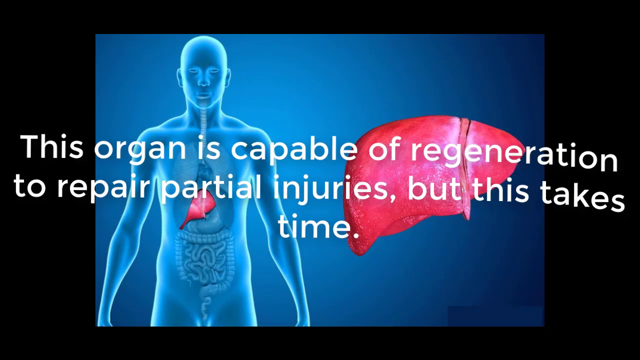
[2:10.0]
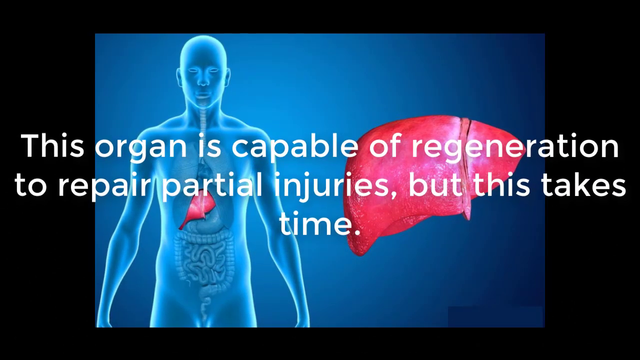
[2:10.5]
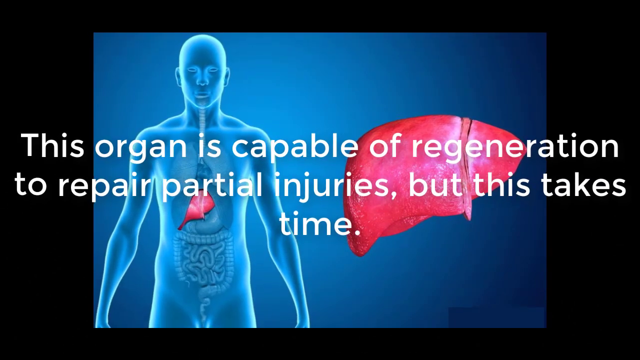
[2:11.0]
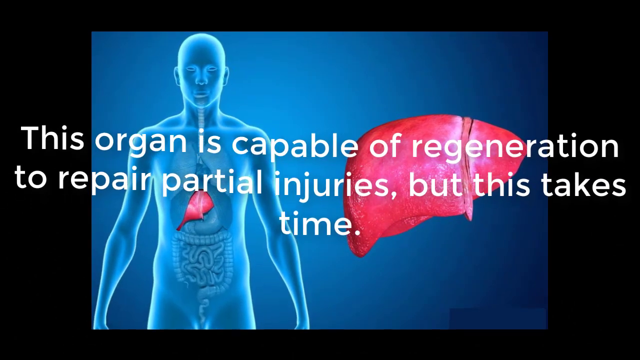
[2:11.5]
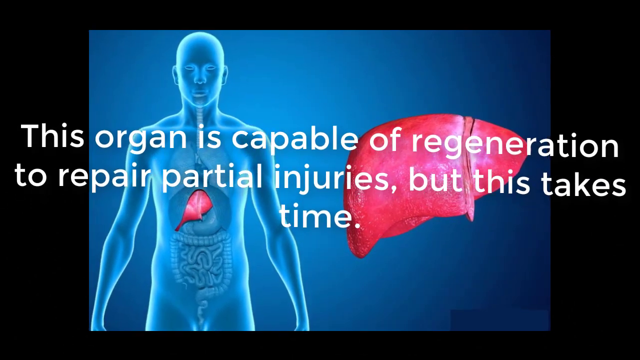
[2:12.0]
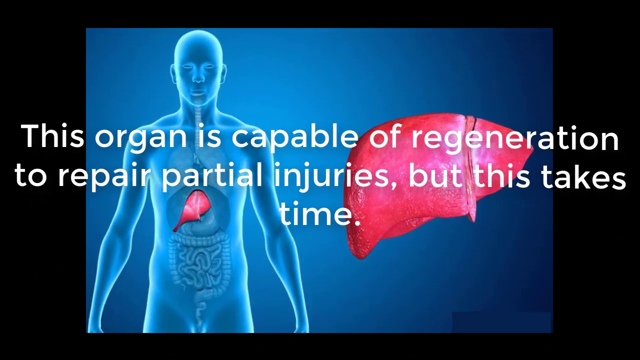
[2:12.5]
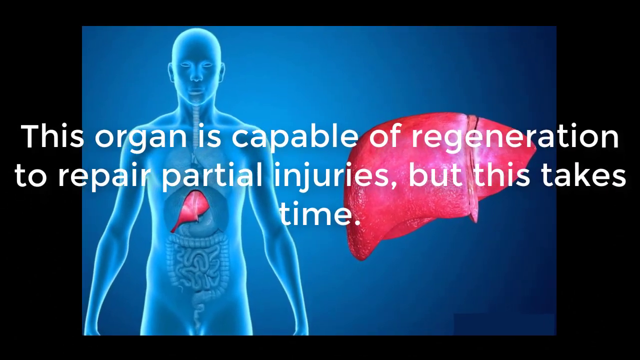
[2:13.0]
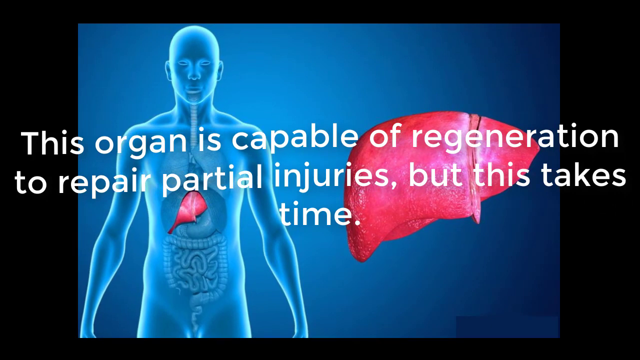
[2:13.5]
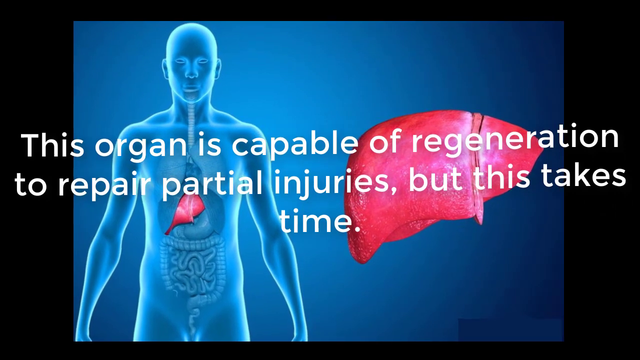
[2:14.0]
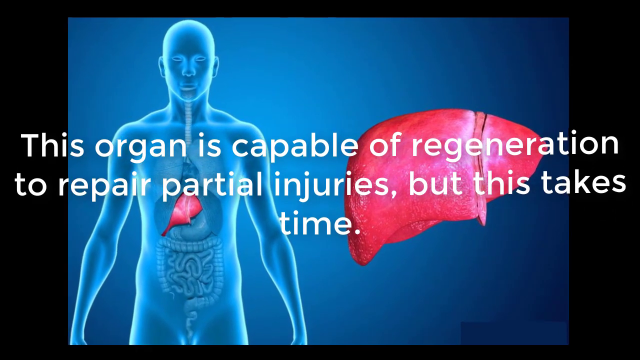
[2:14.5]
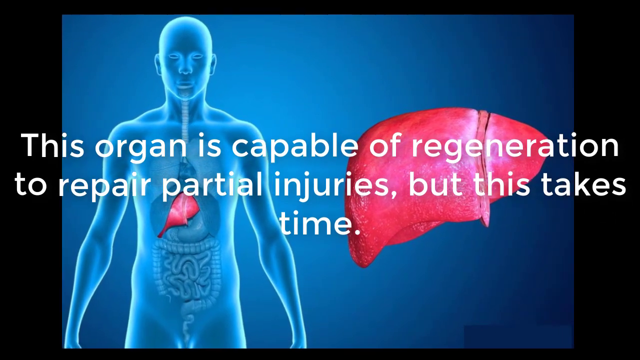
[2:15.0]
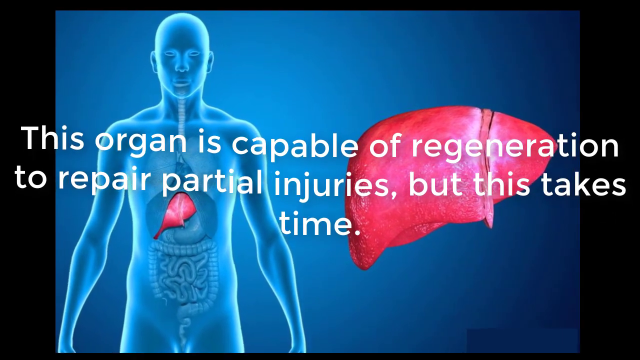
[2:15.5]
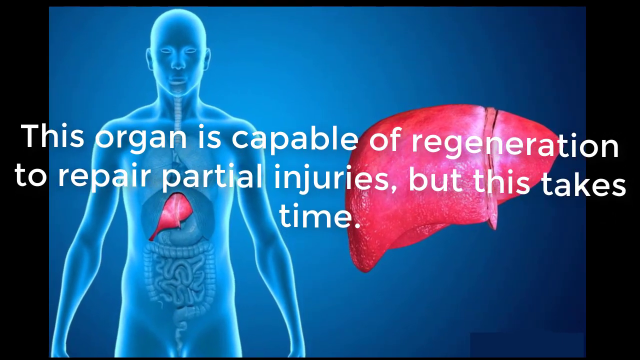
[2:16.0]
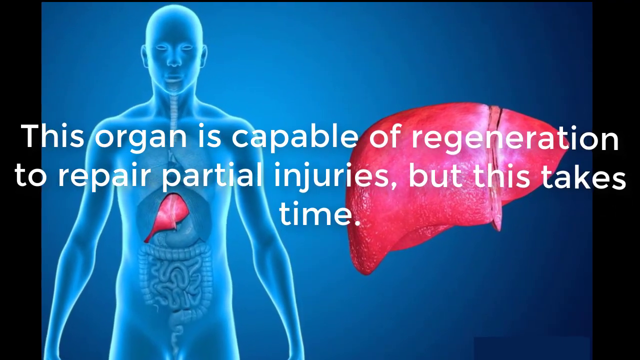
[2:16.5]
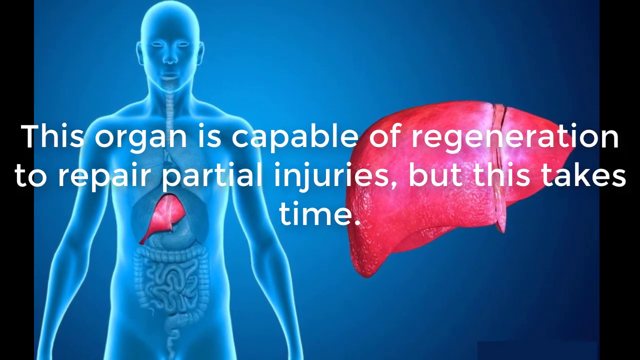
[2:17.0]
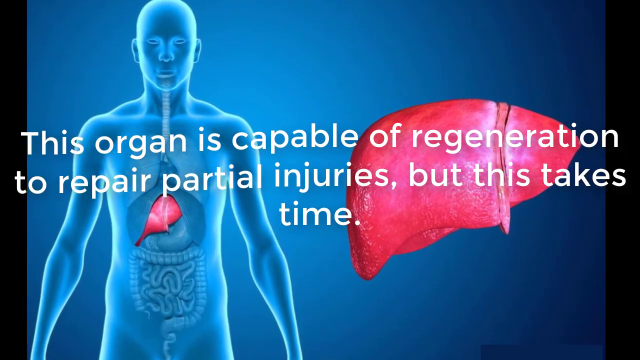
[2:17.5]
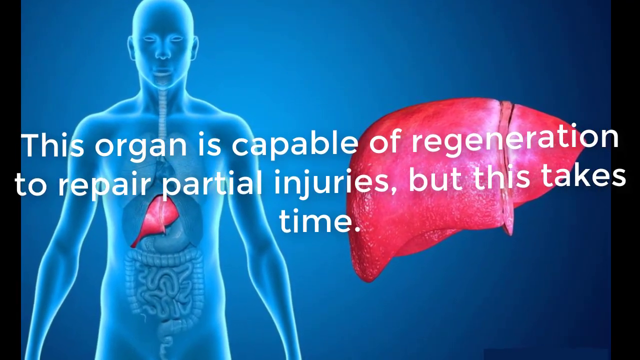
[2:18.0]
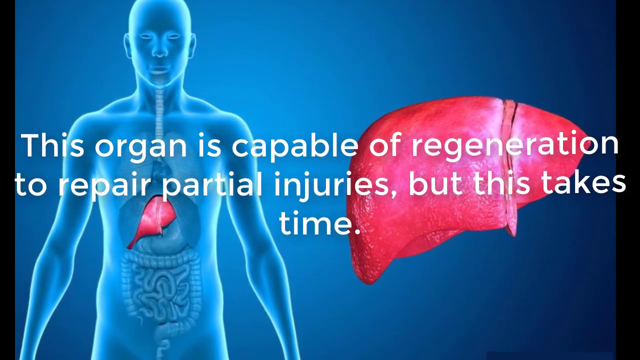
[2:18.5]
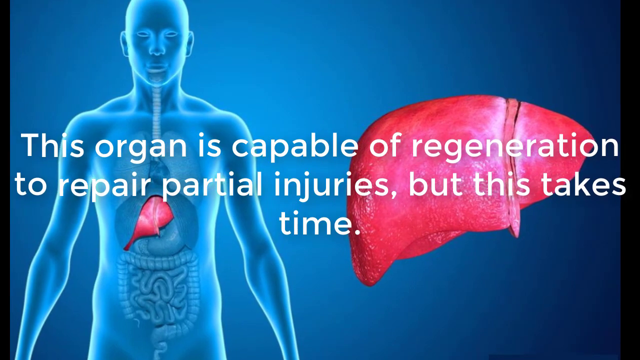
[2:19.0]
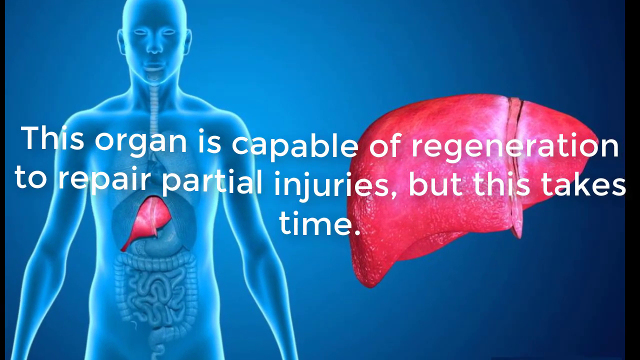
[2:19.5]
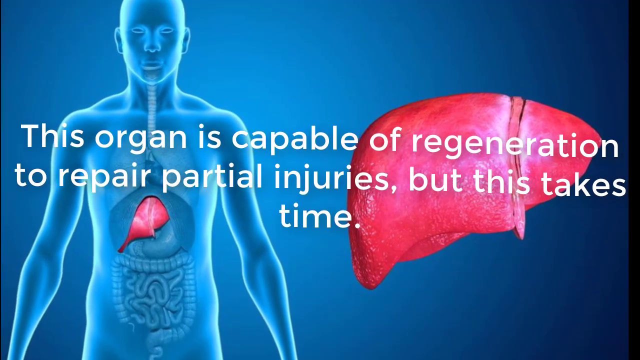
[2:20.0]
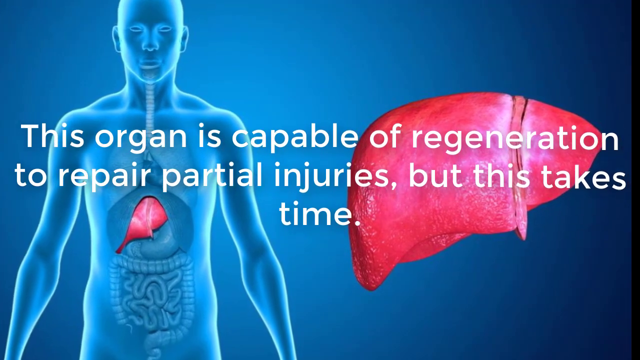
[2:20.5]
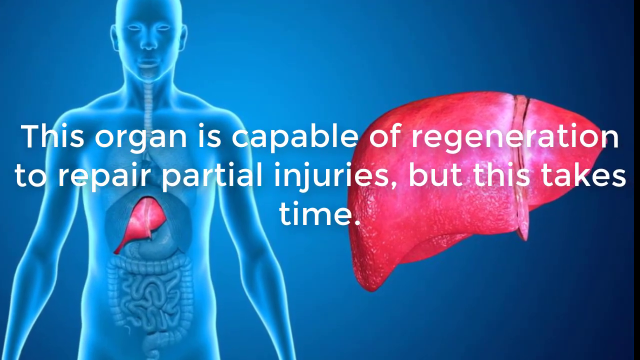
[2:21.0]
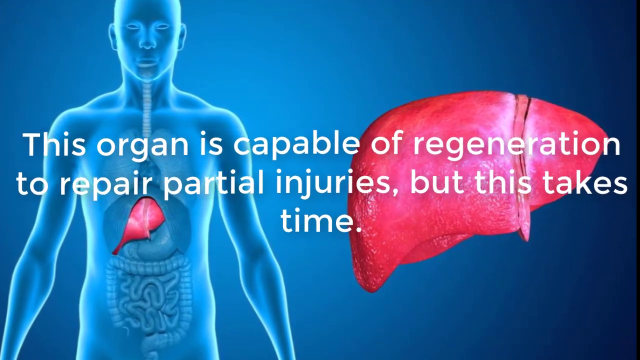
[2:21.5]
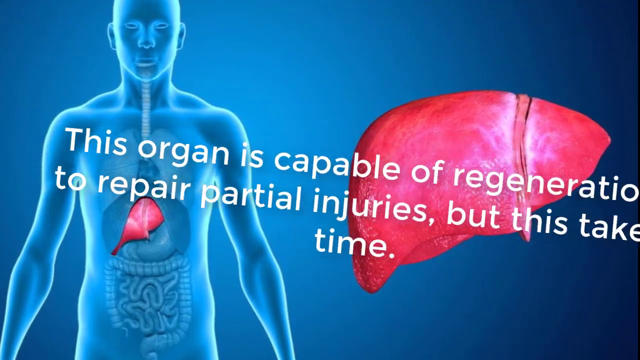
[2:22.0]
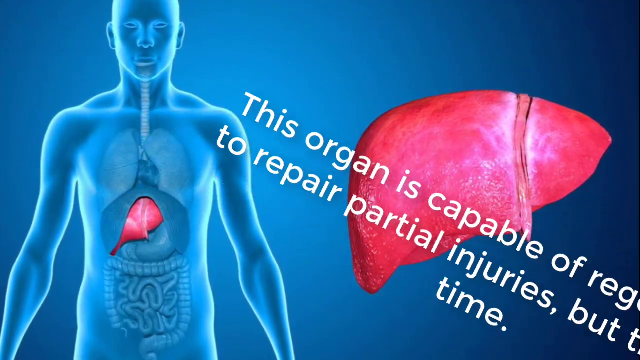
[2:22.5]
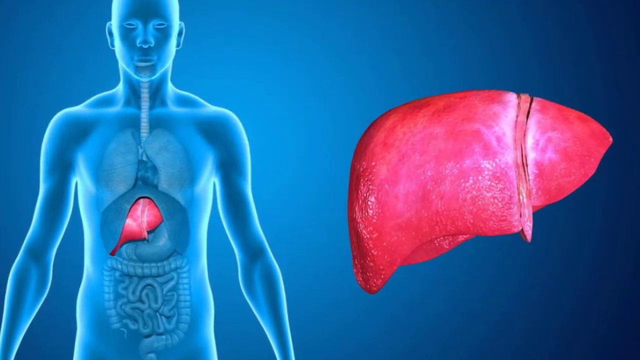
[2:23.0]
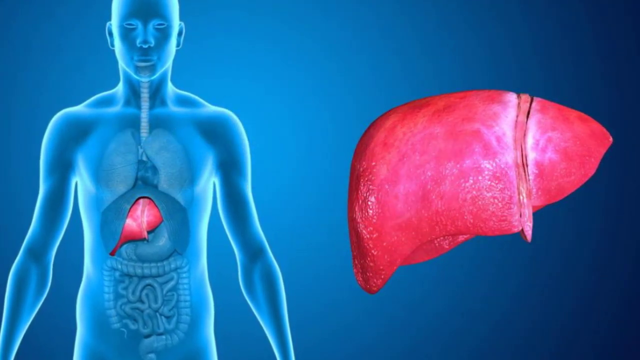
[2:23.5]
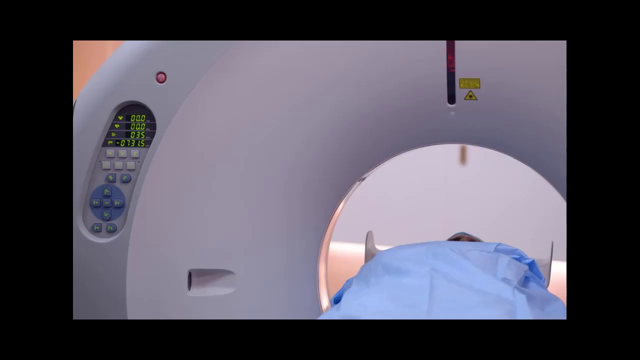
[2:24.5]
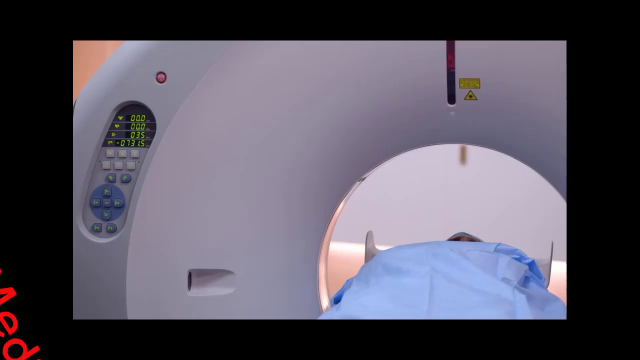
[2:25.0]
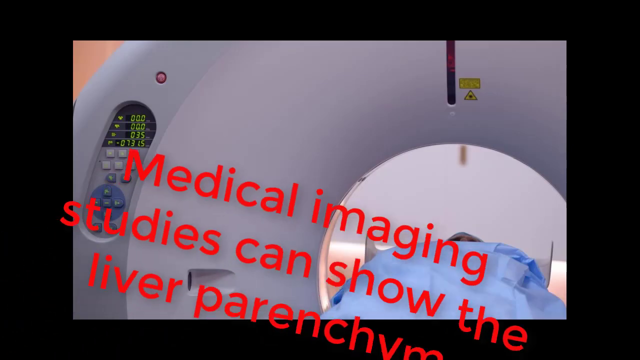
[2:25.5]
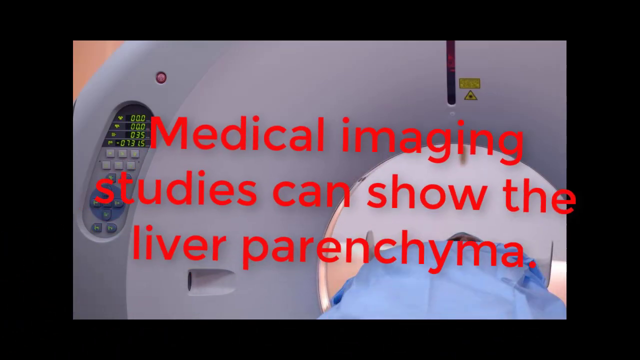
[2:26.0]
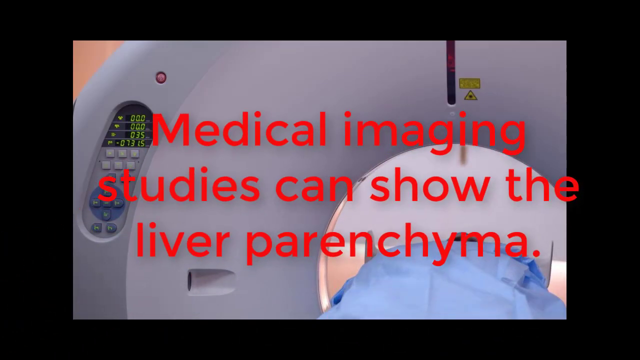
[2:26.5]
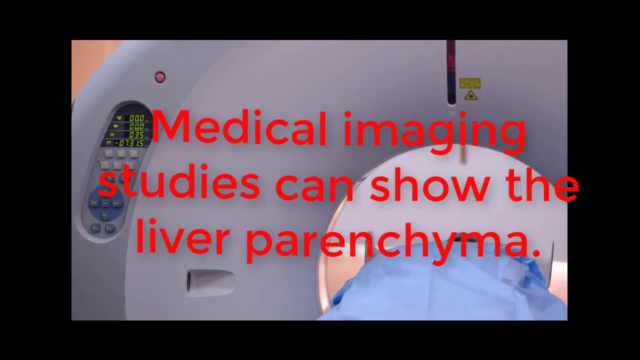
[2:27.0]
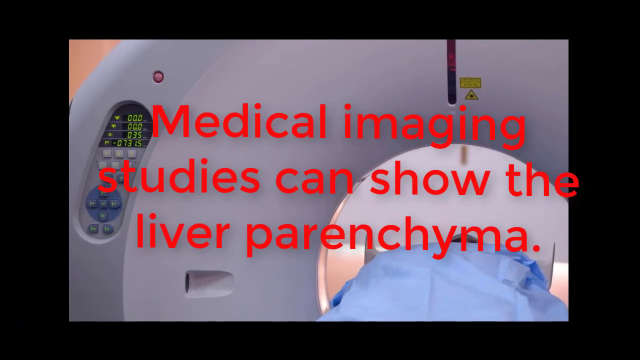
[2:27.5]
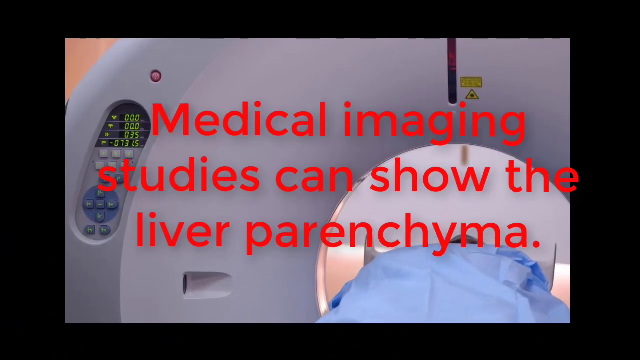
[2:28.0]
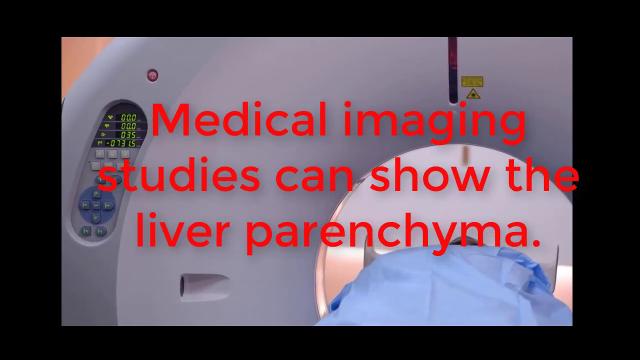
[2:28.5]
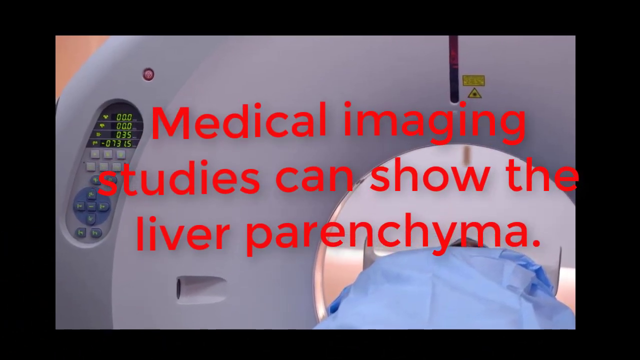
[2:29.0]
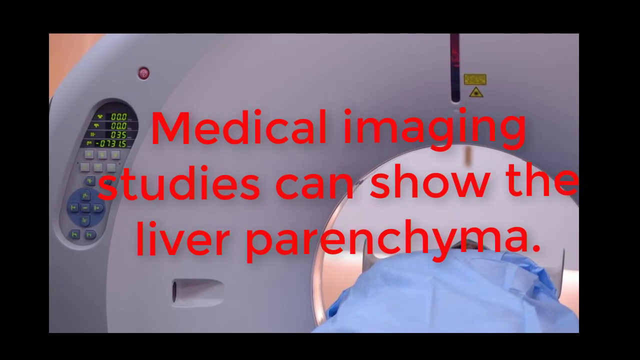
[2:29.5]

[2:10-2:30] A kind of silhouette of a person, blue against a blue background, shows the inside of the body, where a liver with a pinkish color stands out while the rest of the intestines are blue, kind of highlighting the liver. On the right side is a larger picture of a liver. White text in the foreground reads "this organ is capable of regeneration to repair partial injuries but this takes time." The text is kind of wiggling like a wave, while in the background the camera zooms in for a closer shot of the liver. The words then fly out from left to right, and it cuts to a picture of an MRI machine with text in the foreground reading "medical imaging studies can show the liver parenchyma."